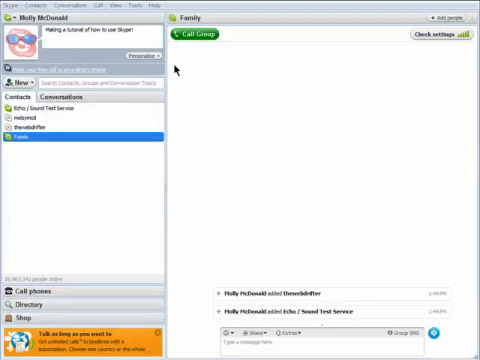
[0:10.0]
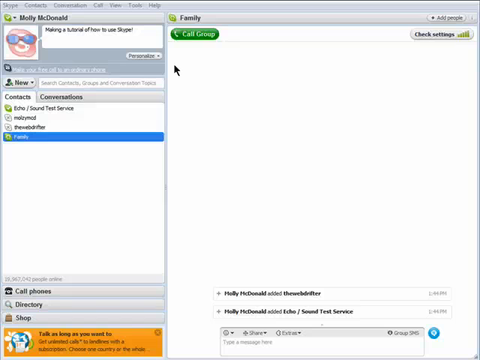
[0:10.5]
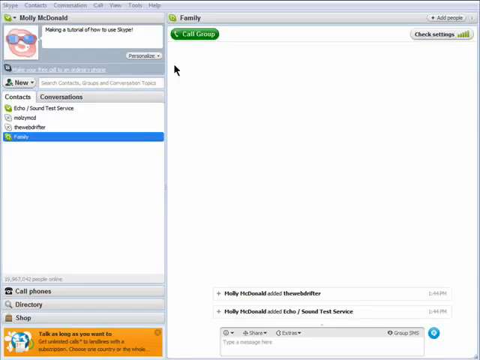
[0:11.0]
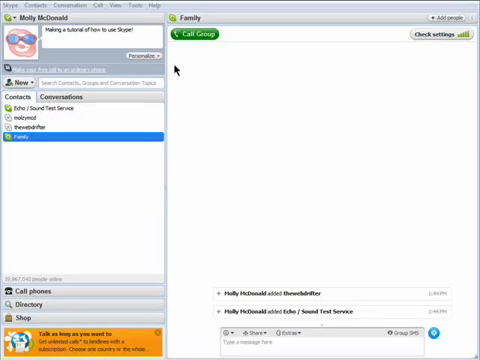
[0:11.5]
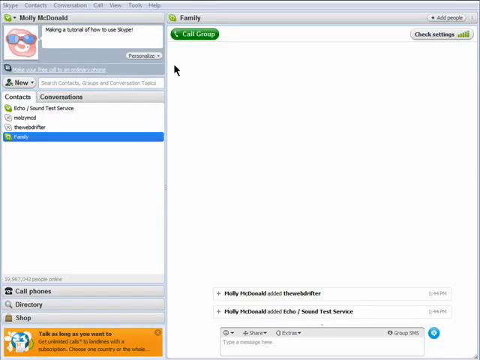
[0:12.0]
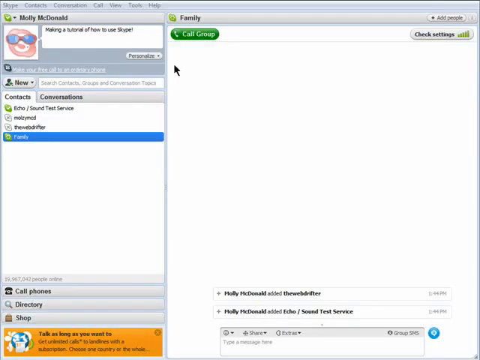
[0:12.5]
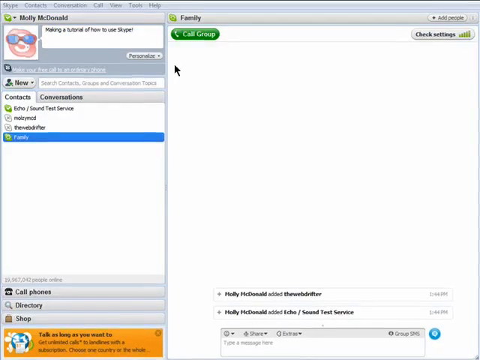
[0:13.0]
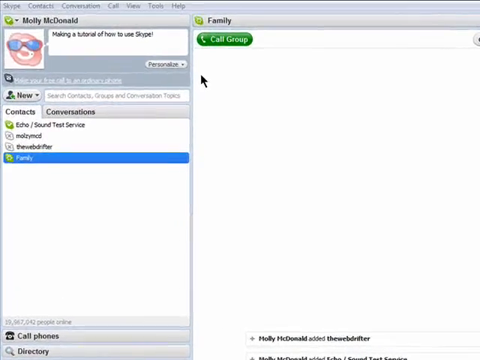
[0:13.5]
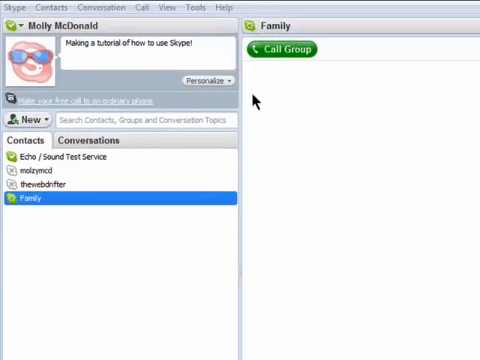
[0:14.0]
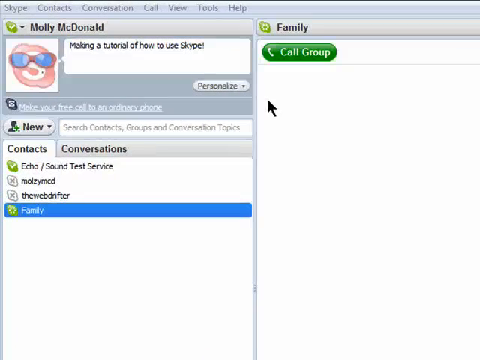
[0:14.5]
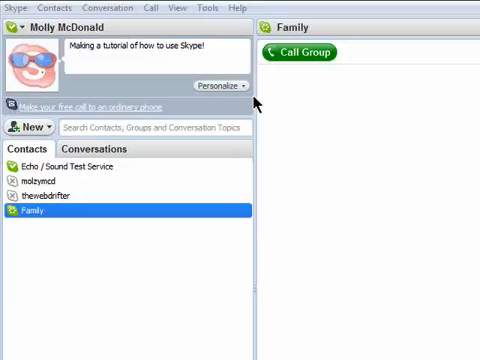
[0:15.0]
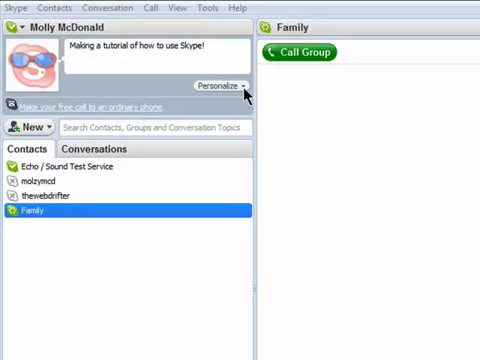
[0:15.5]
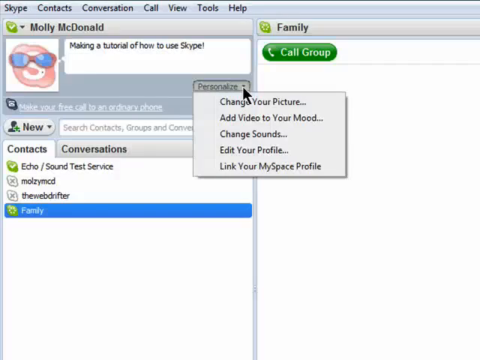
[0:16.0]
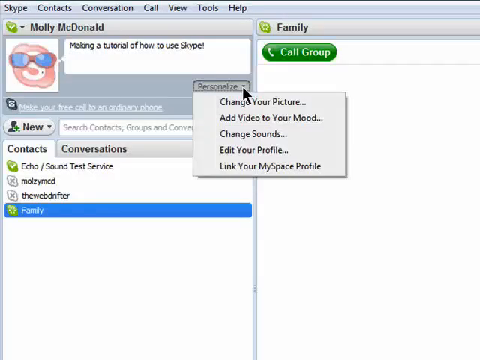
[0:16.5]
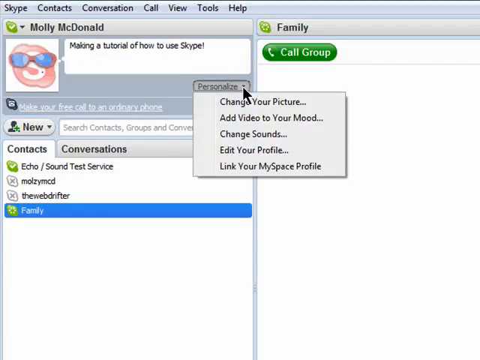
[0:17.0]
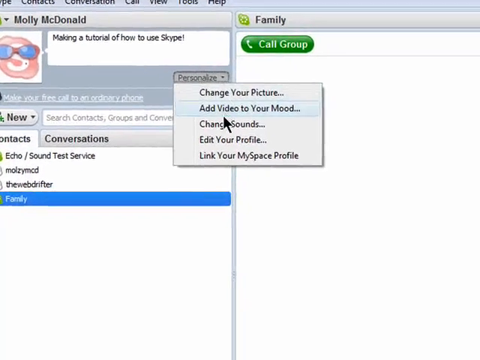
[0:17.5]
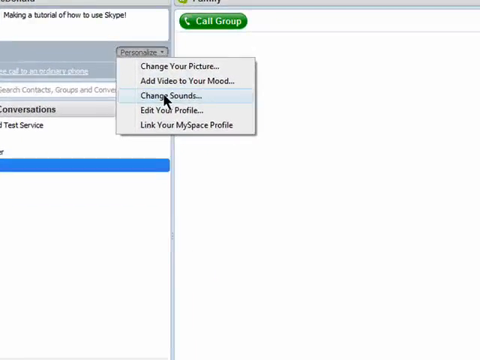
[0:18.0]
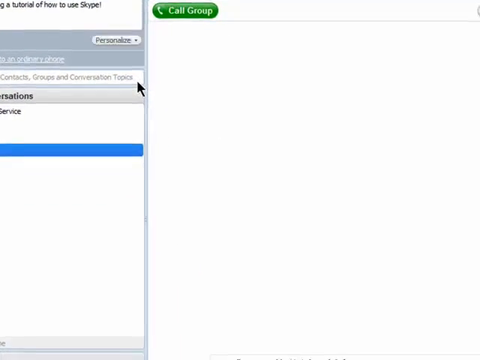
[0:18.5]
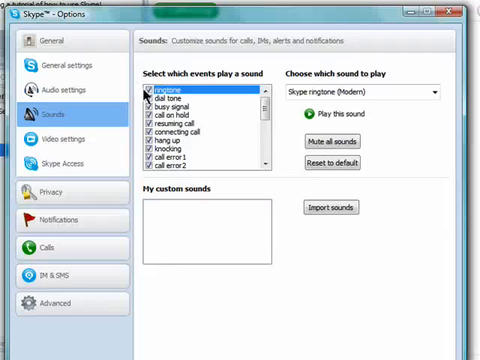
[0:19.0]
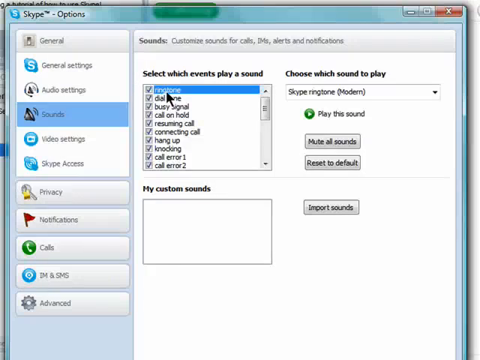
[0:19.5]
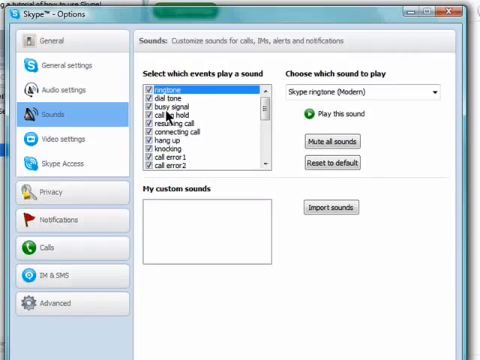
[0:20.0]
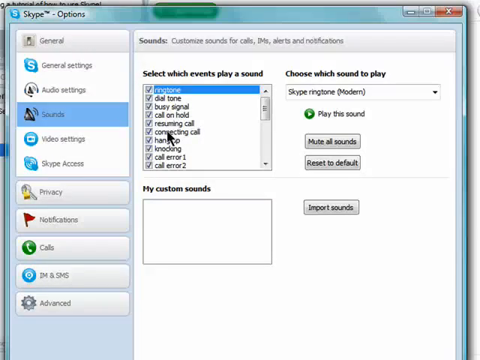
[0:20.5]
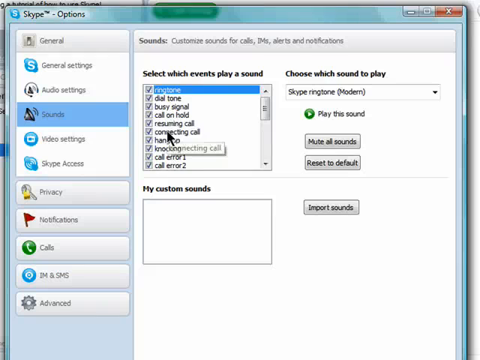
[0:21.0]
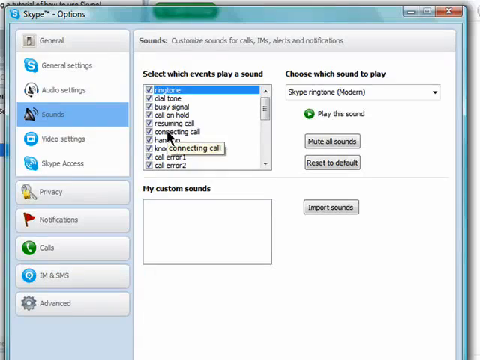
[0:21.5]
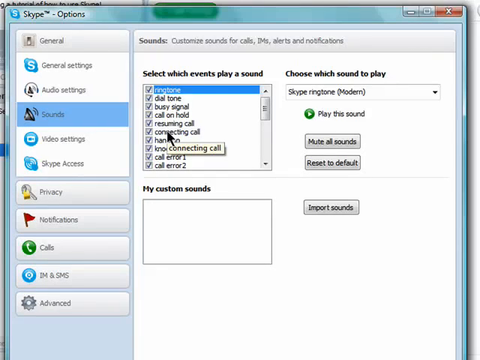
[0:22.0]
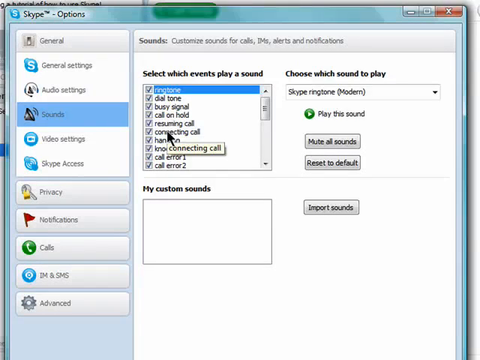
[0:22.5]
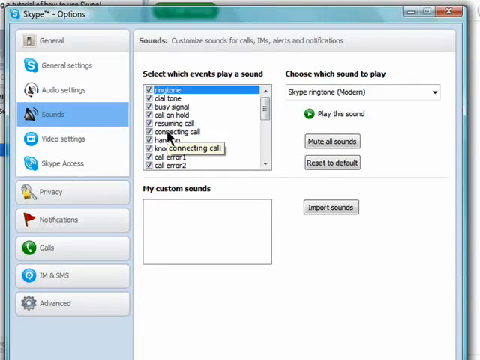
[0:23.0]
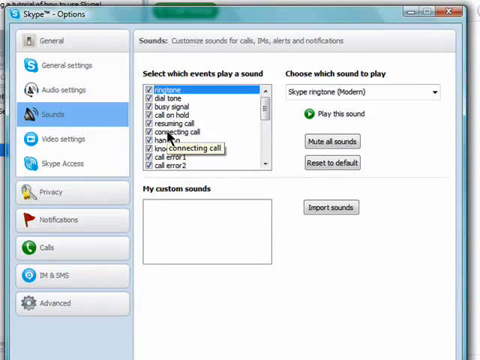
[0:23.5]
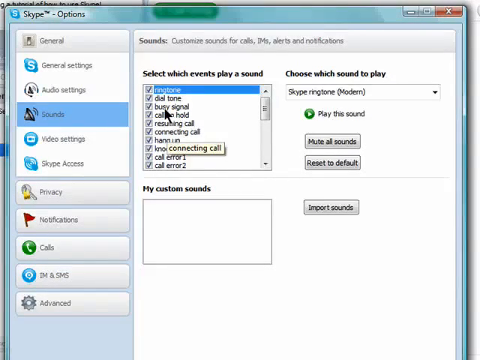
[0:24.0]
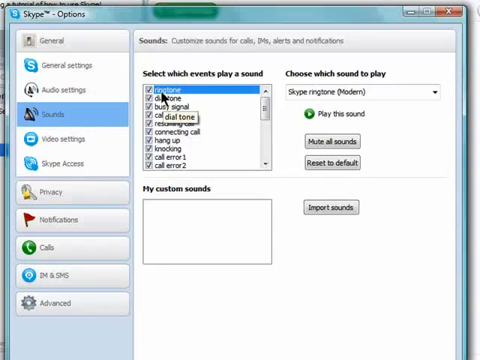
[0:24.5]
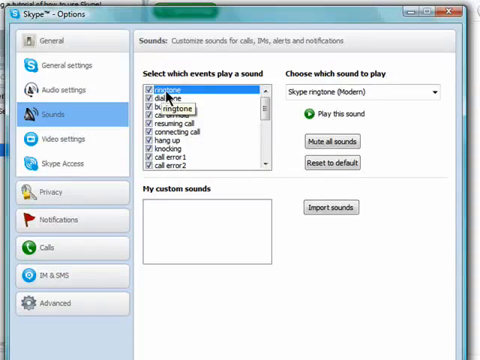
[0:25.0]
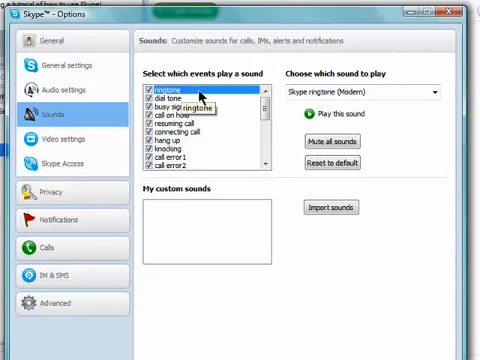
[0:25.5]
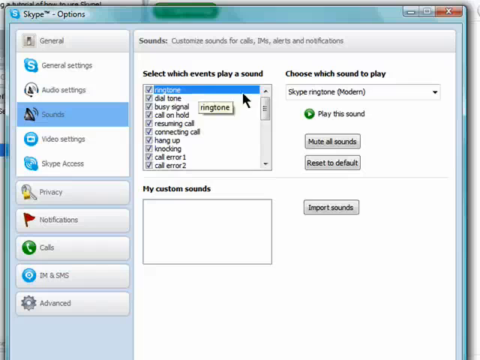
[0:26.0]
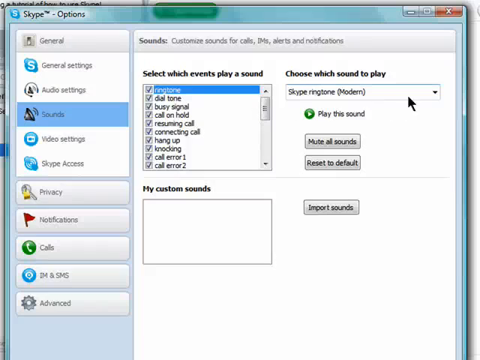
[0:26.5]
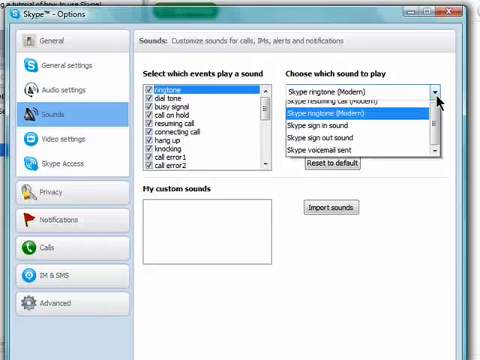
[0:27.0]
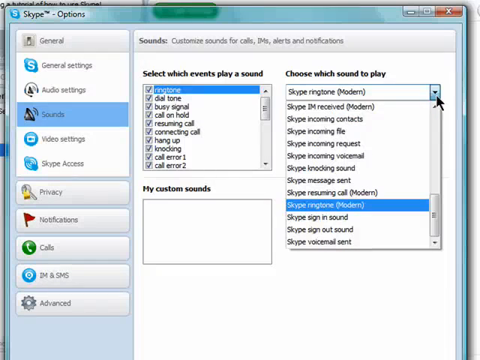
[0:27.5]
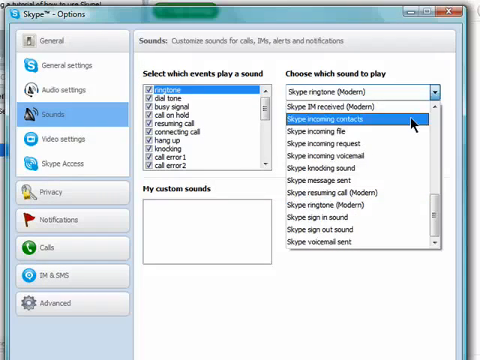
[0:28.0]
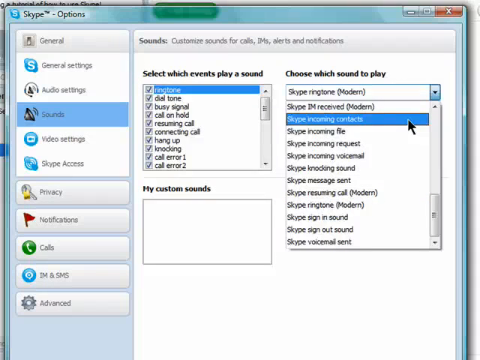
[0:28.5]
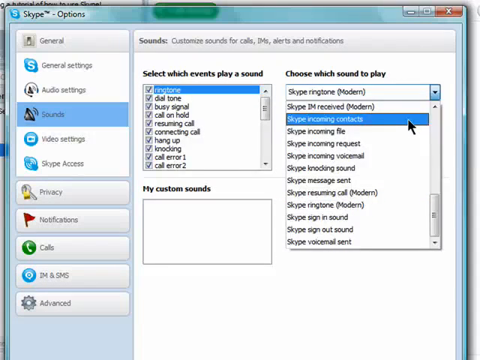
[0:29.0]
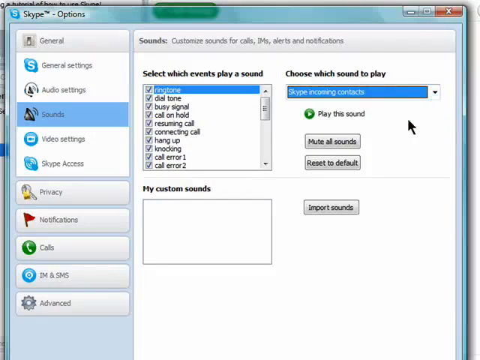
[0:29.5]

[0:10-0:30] What looks like a computer screen appears, closer to square than a typical laptop screen, with two panels; the right panel is wider than the left. In the top left of the left panel is "Molly McDonald". Beneath it is a kind of avatar: a sort of pinkish shape wearing sunglasses with blue shades. To its right there looks like a text field with something small written in it. Below that is a Contacts section with four listings, which all look like they have maybe folders on the left followed by words; it is all pretty small. The right side is emptier, looking like an empty screen where a lot of text will be entered. The view zooms in on the left part of the screen showing the contacts. A black arrow cursor, pointing up and slightly to the left, moves near a button that says "Personalize" and presses it, opening a window with five items. It scrolls down and clicks the third one, "Changing sounds", and a new screen appears with a similar setup: a menu of choices on the left, and on the right the white box, which now has a few windows in it. The cursor hangs around one that says "Select which events play a sound", which lists about 10 items with checkmark boxes to their left. The arrow moves slowly down the list, rests on something that says connecting call, then goes back up to ringtone, which is highlighted in blue. It then moves to the right to another window with the header "Choose which sound to play". It clicks the downward arrow of a drop-down menu on the right, opening a menu of about 12 items that all start with the word "Skype". The cursor goes down and selects the second one, turning it blue.